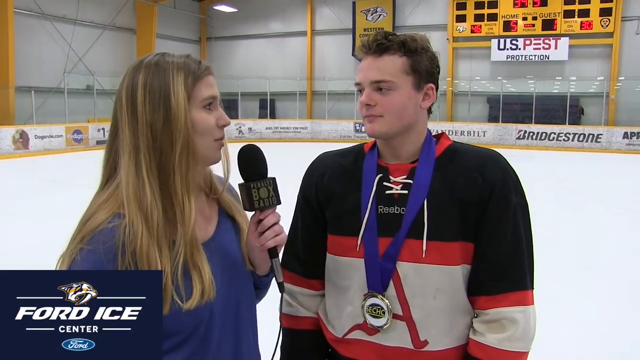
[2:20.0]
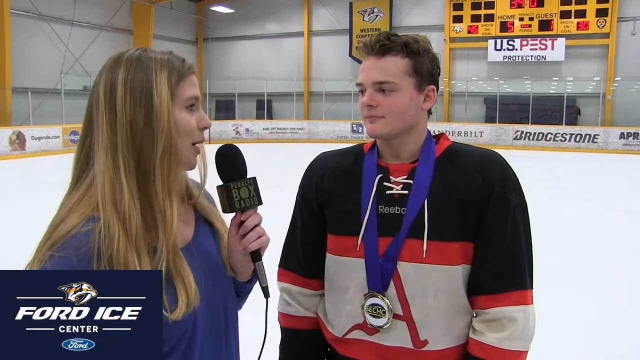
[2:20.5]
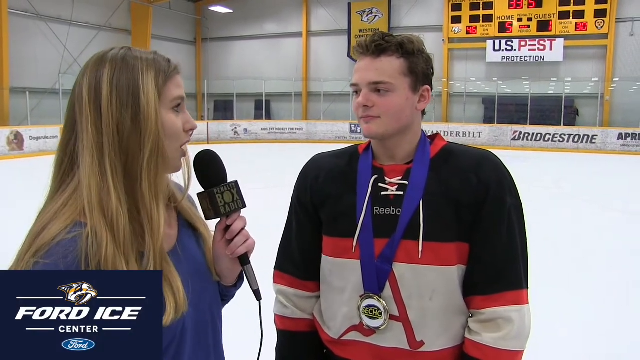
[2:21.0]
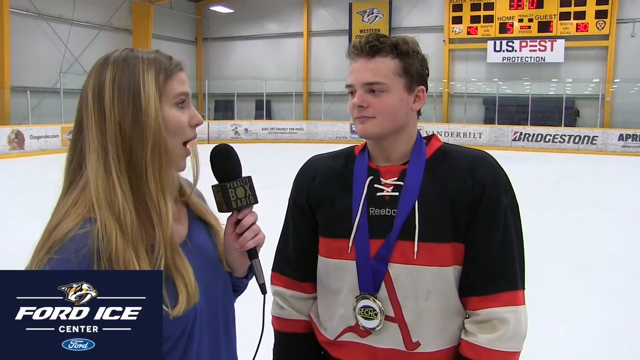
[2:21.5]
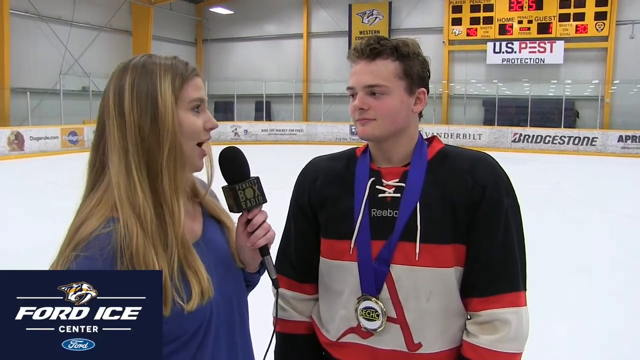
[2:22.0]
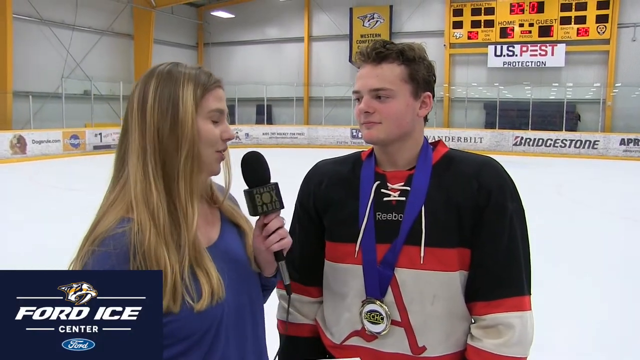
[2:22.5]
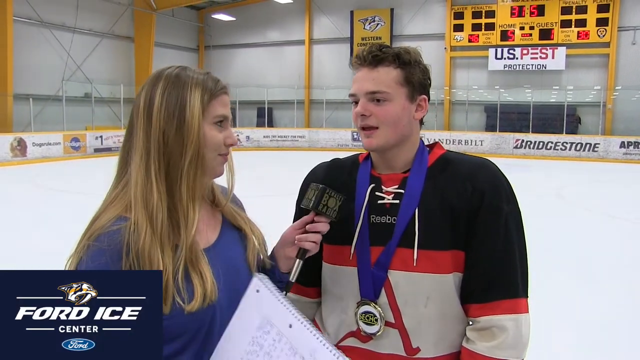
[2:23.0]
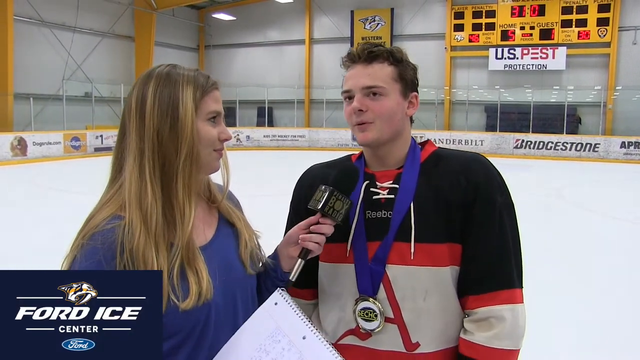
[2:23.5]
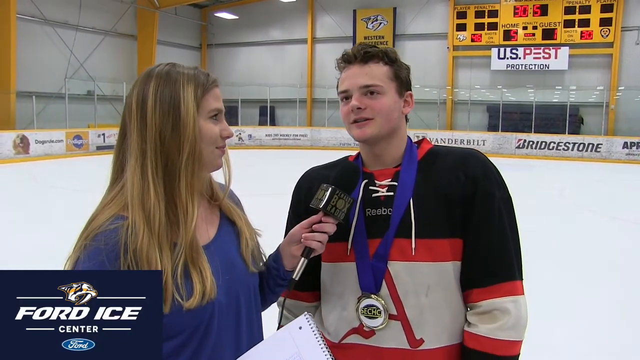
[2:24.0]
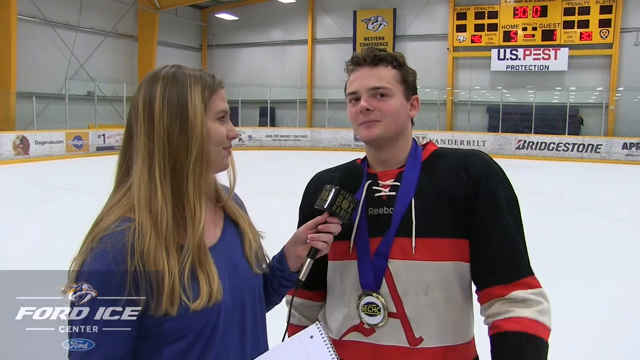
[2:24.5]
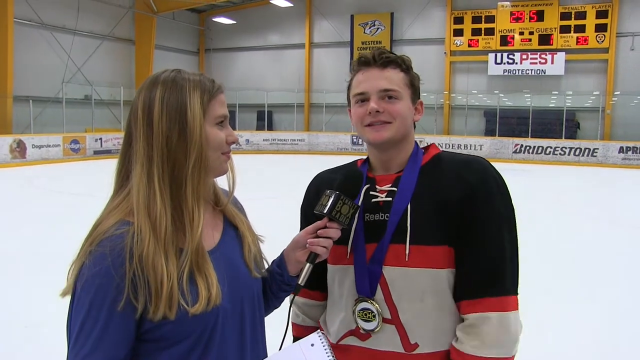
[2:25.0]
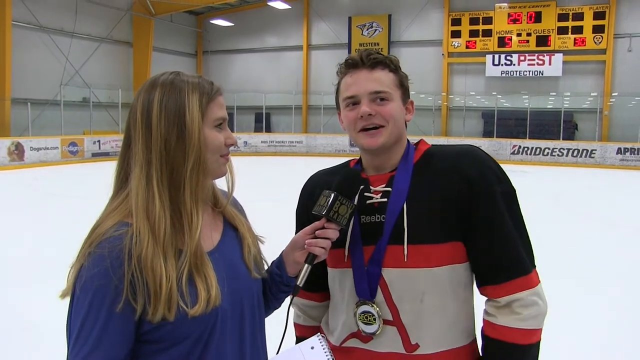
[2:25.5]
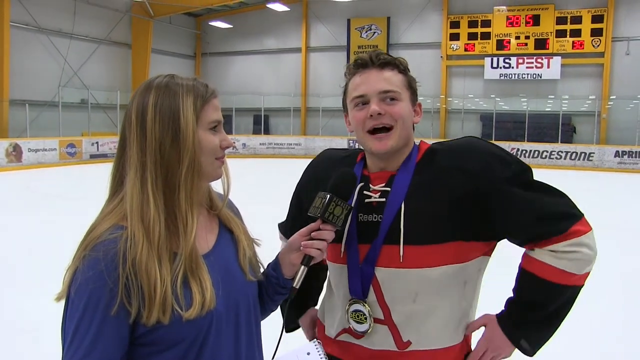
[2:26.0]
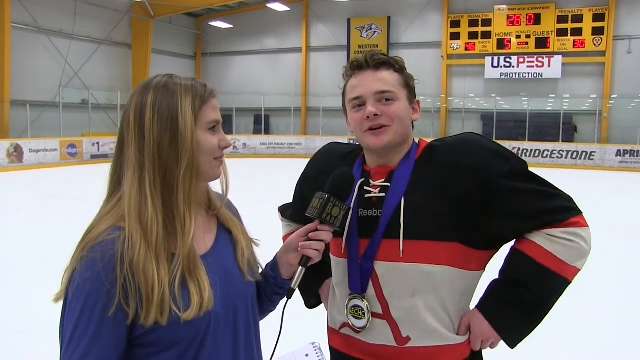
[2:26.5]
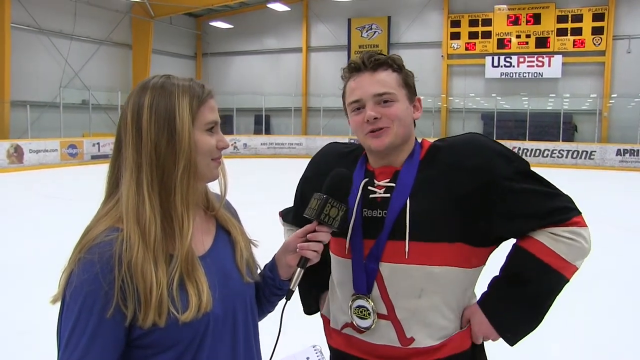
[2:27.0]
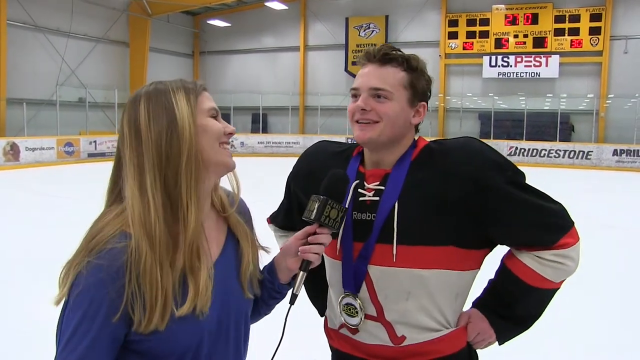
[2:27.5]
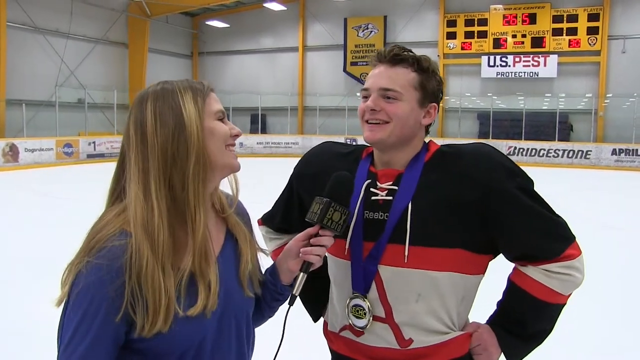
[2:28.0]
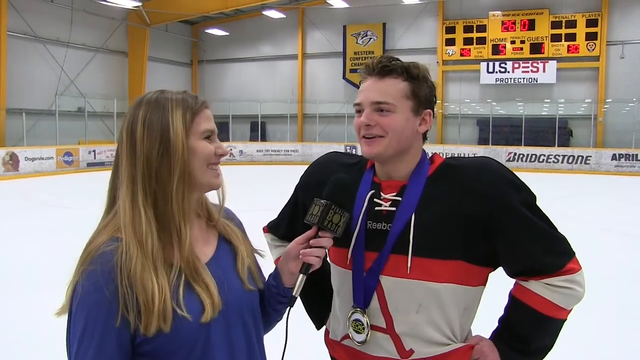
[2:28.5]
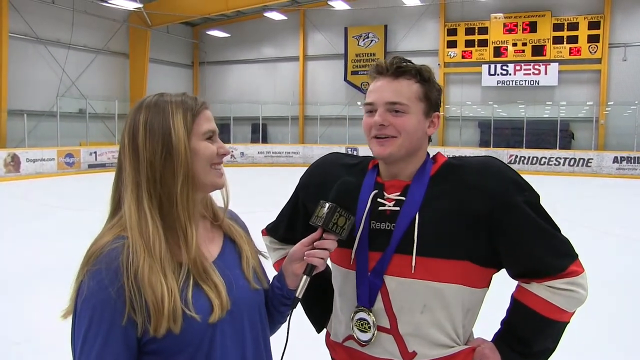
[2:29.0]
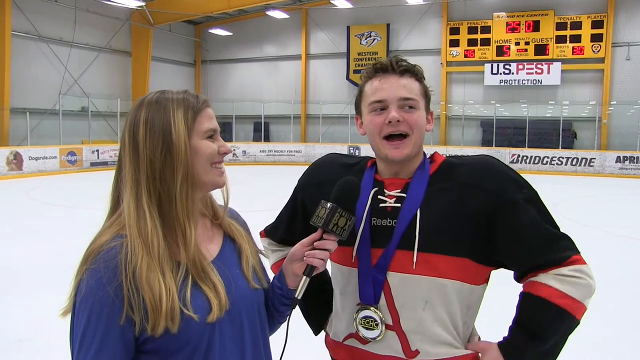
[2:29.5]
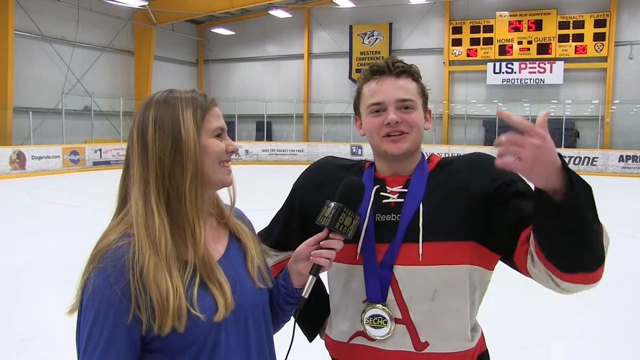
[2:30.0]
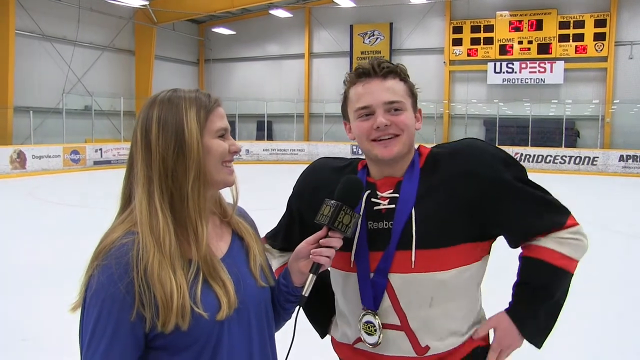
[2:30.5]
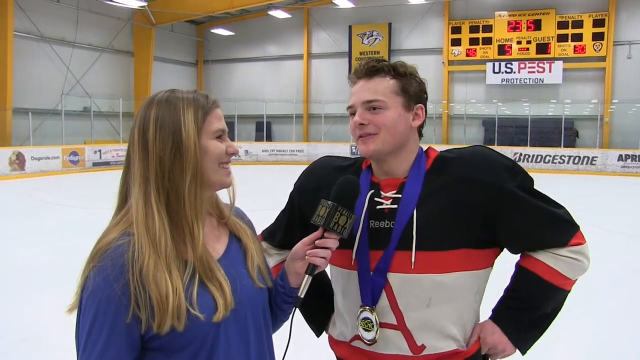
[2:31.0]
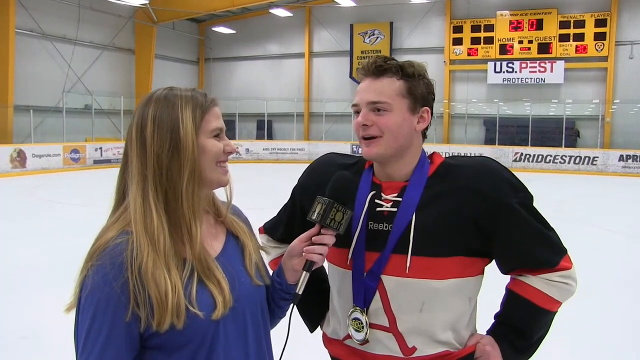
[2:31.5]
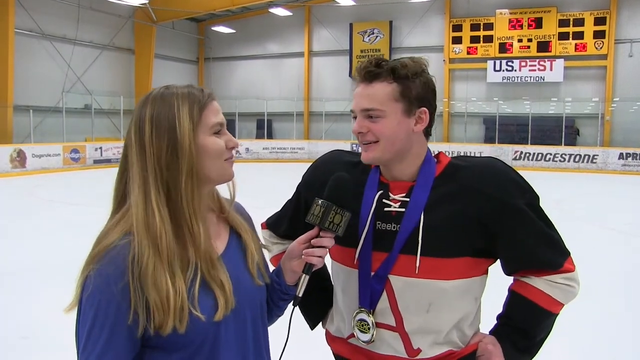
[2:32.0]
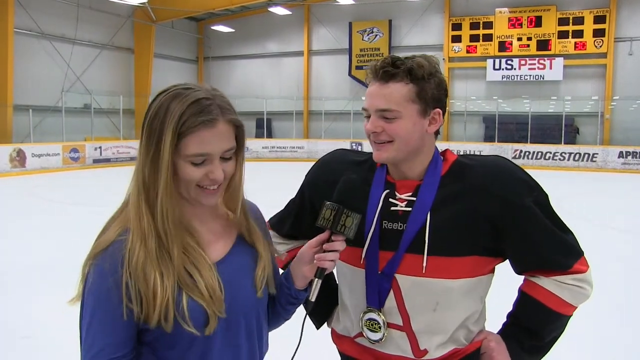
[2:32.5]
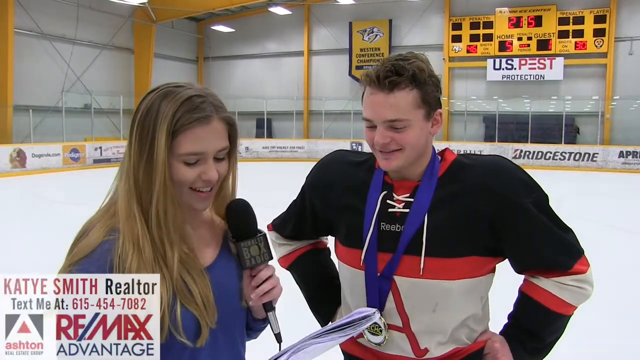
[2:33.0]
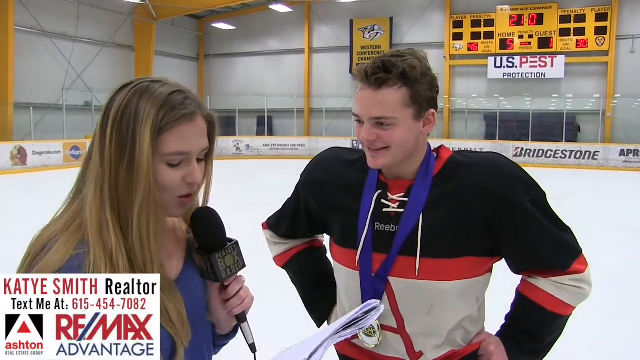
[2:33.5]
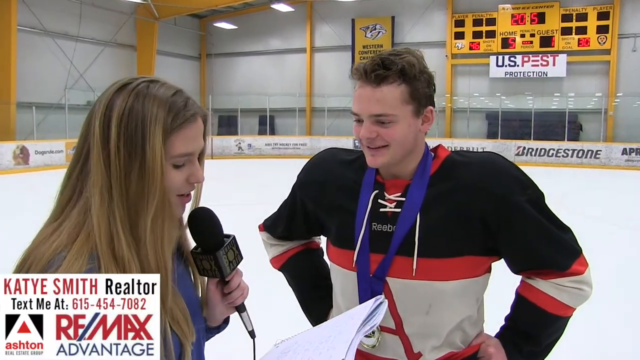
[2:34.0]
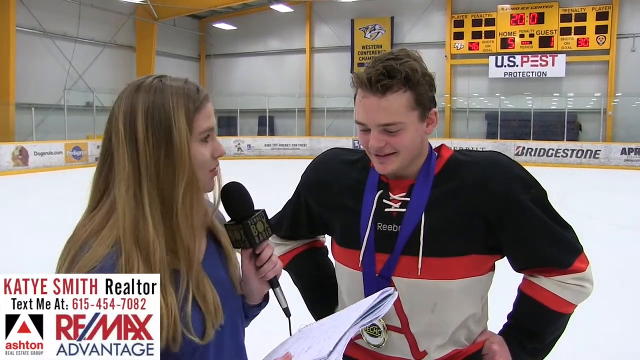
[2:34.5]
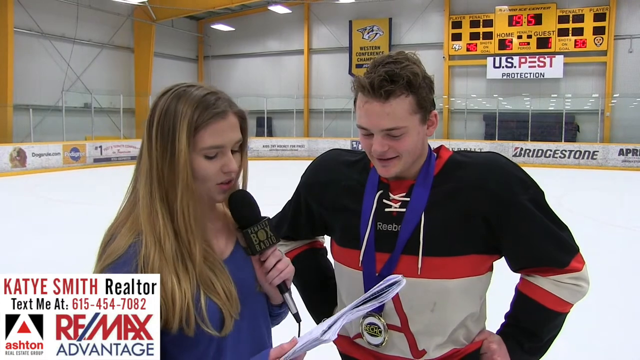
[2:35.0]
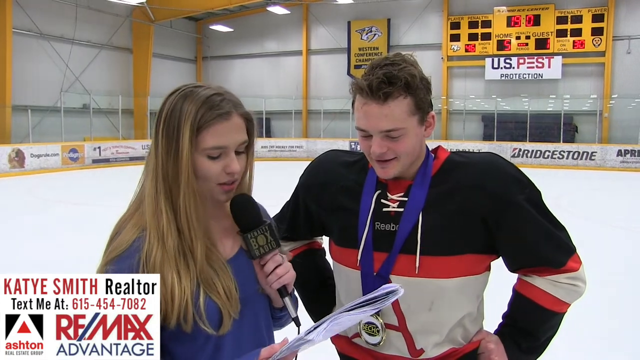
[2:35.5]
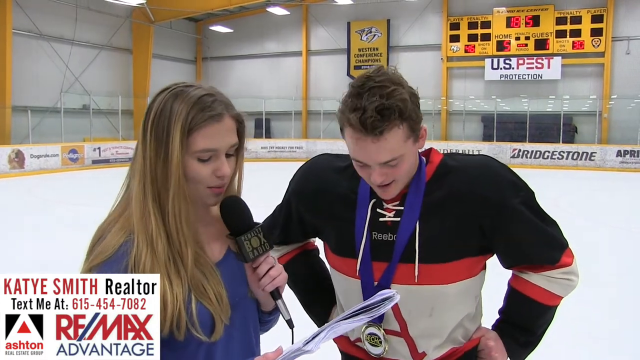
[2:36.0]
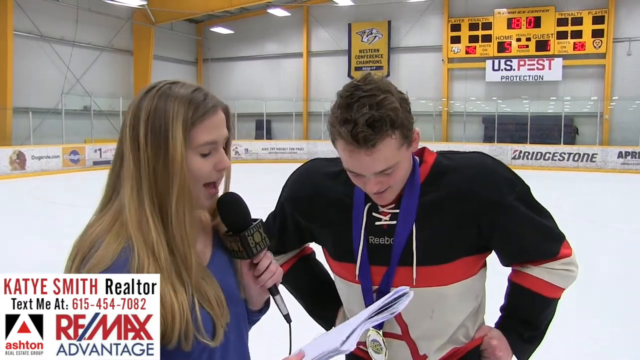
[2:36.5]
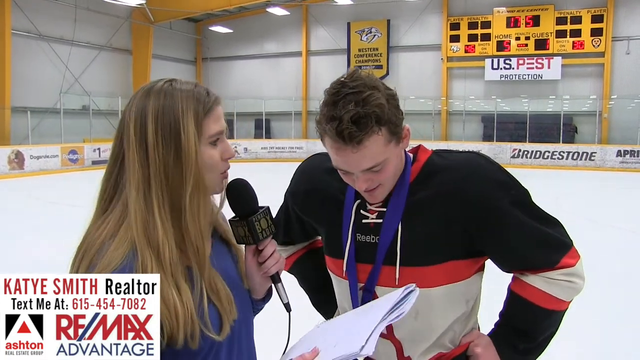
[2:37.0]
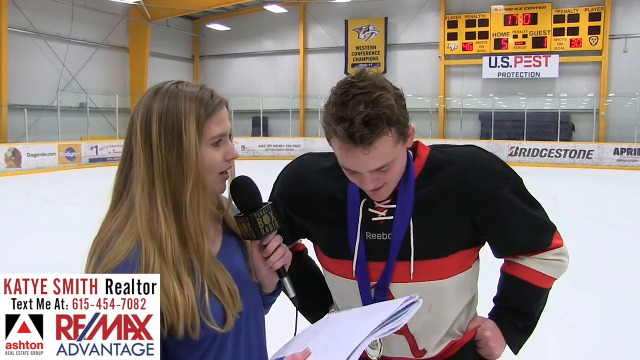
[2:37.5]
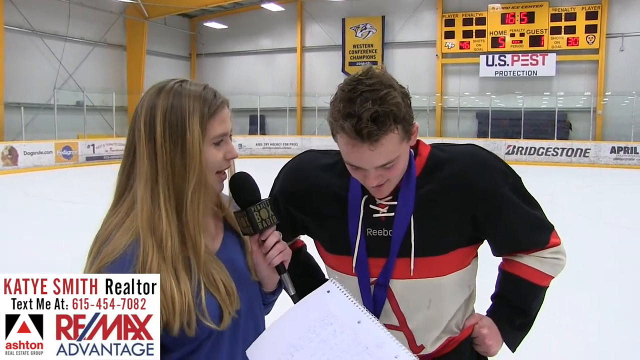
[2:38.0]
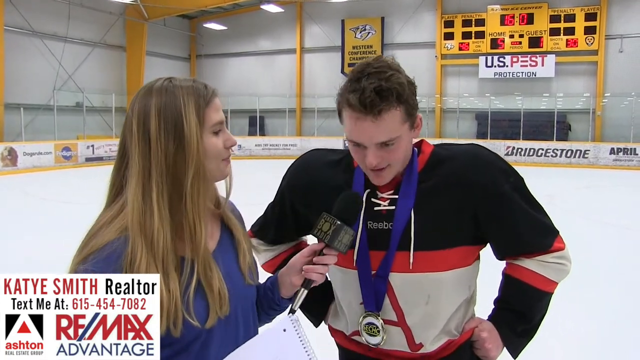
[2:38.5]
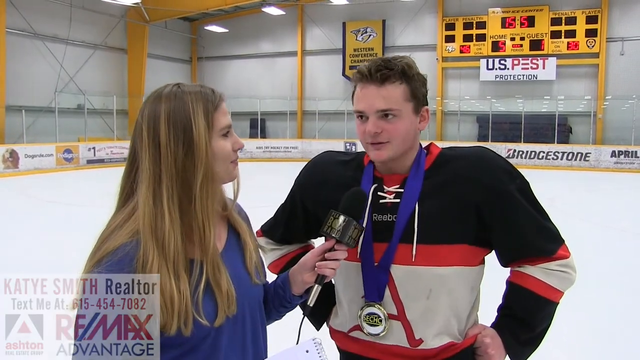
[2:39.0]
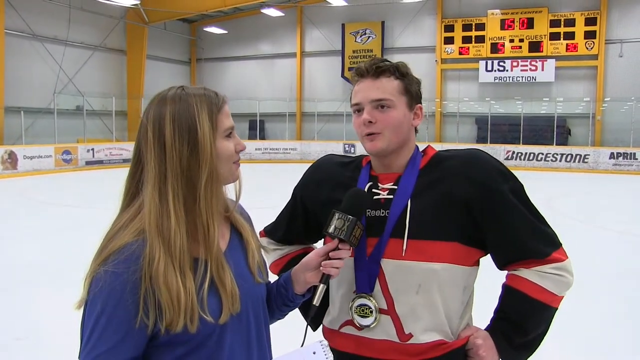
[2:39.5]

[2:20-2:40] A hockey player with a red belt on his jersey is interviewed by a woman wearing a purple shirt. A logo at the bottom of the screen reads "Kate Smith" and identifies her as a realtor. The floor is made of ice, and "USPS protection" appears in the background. Yellow pillars are in the background, and the walls are gray.